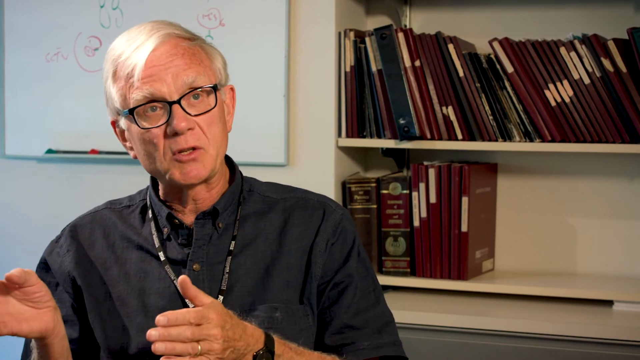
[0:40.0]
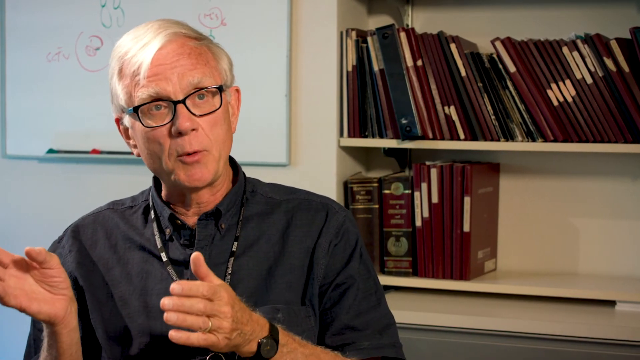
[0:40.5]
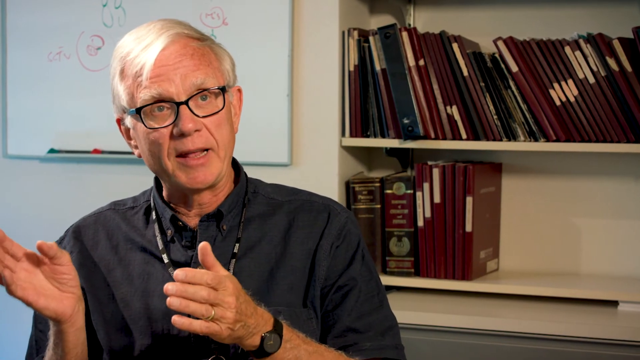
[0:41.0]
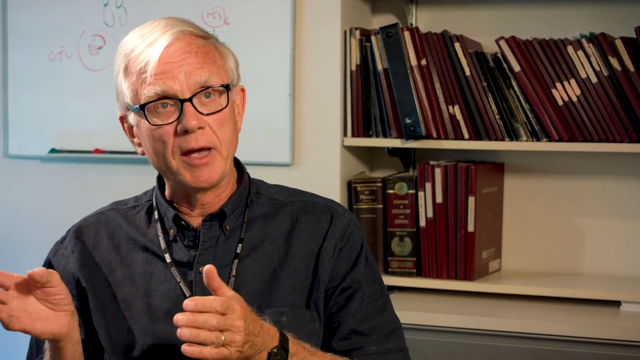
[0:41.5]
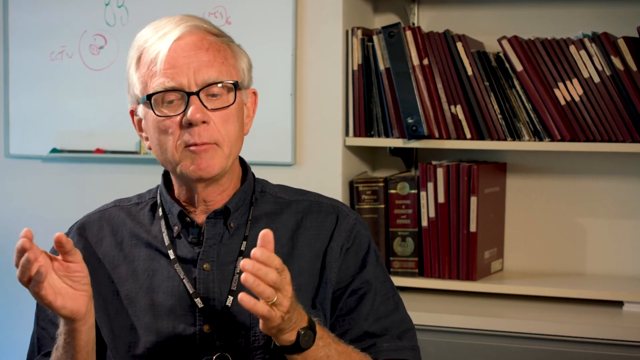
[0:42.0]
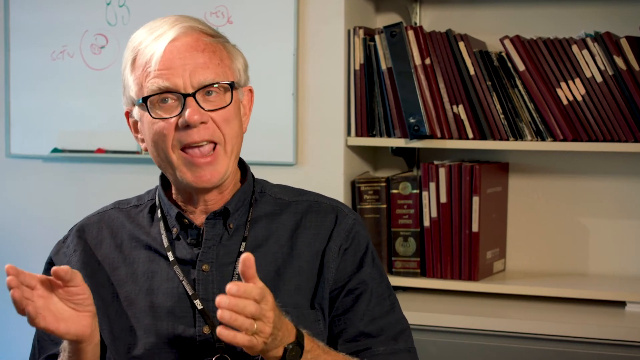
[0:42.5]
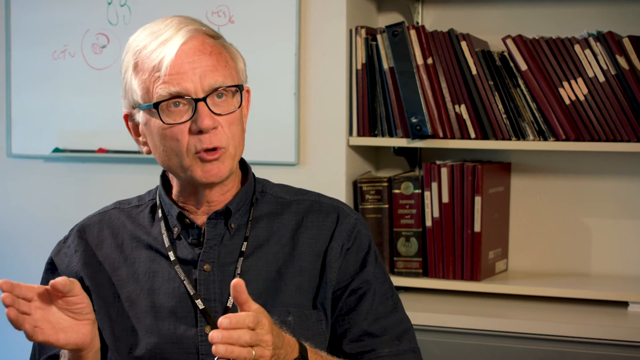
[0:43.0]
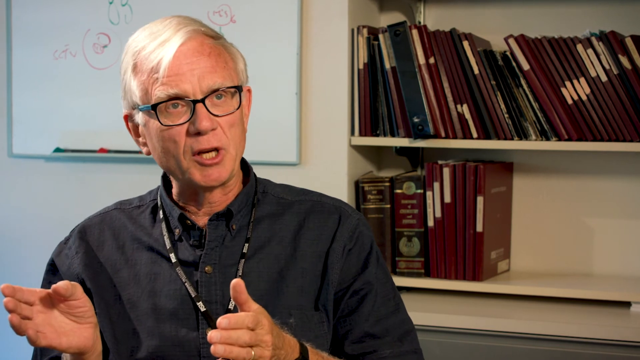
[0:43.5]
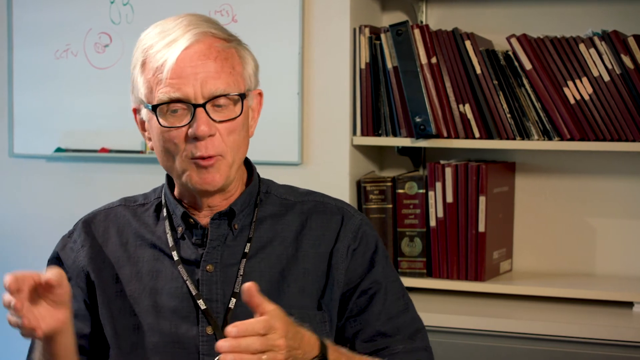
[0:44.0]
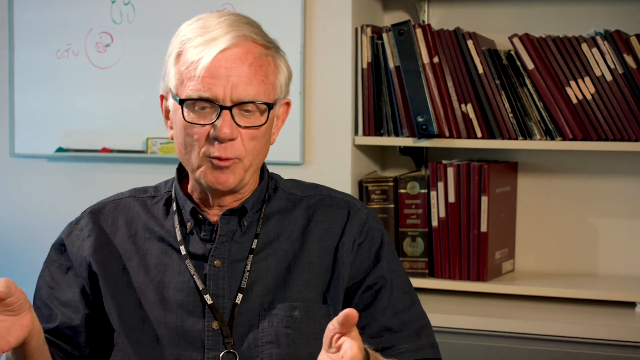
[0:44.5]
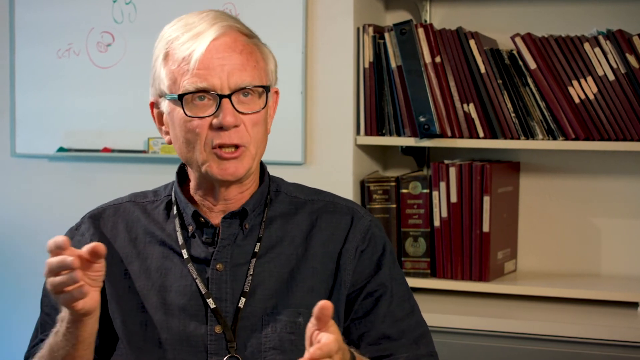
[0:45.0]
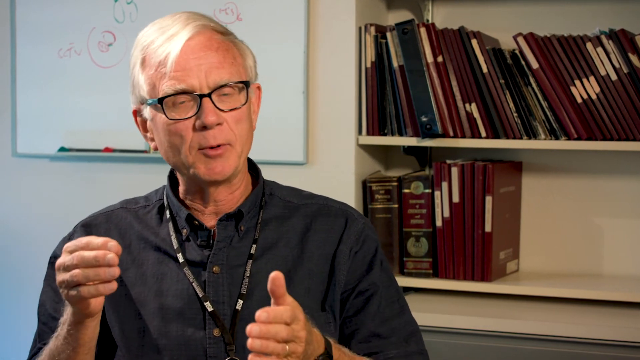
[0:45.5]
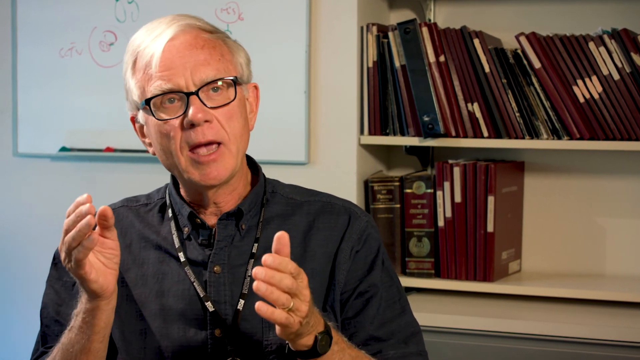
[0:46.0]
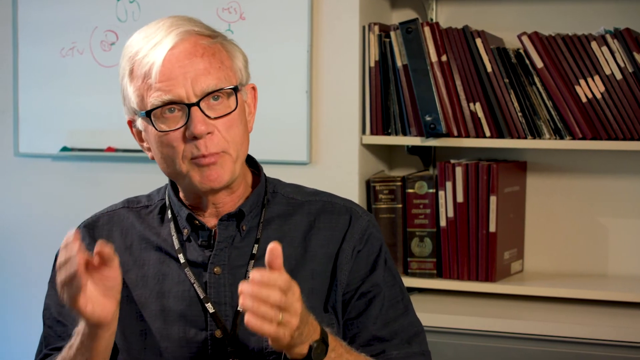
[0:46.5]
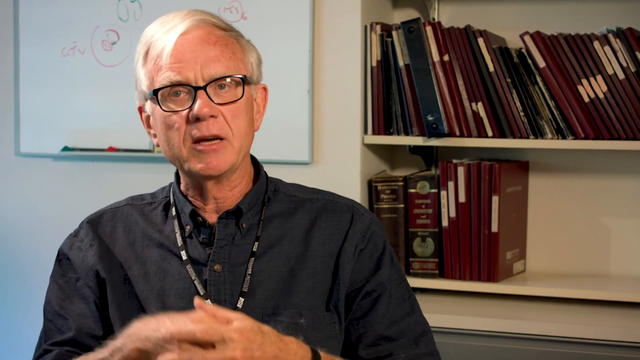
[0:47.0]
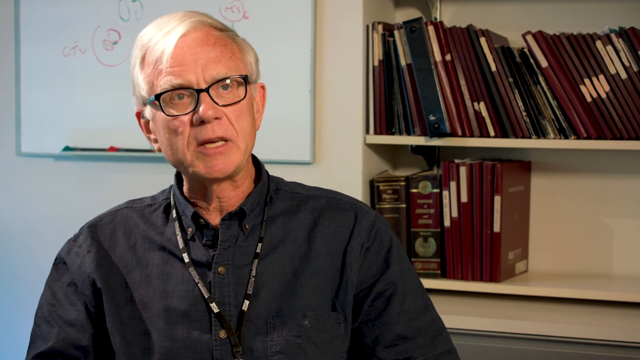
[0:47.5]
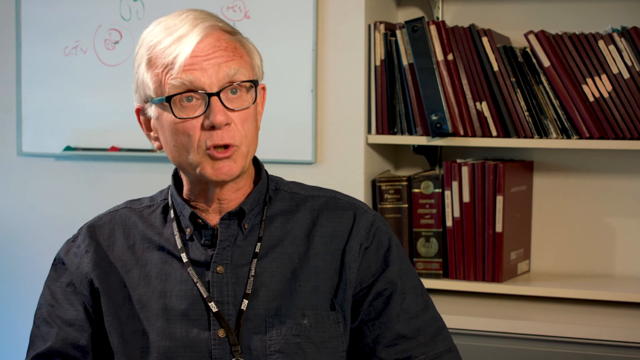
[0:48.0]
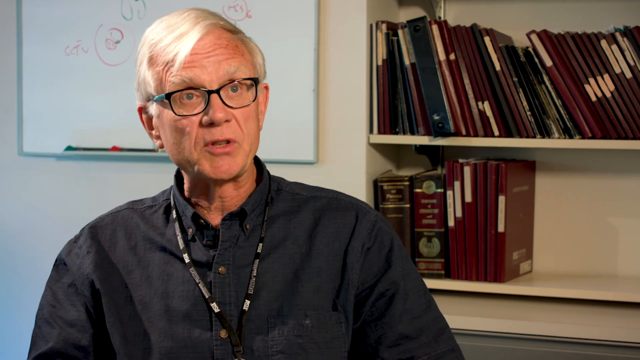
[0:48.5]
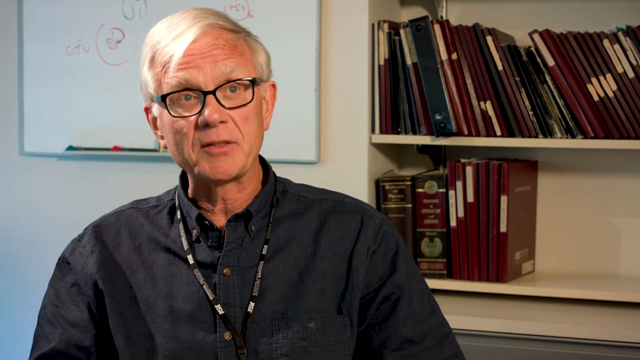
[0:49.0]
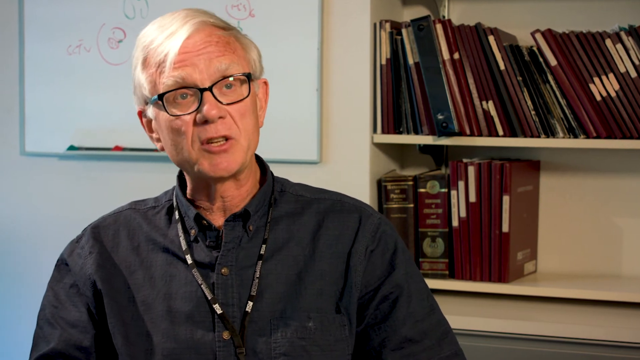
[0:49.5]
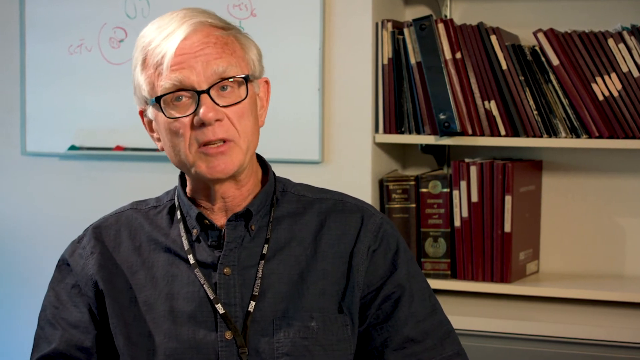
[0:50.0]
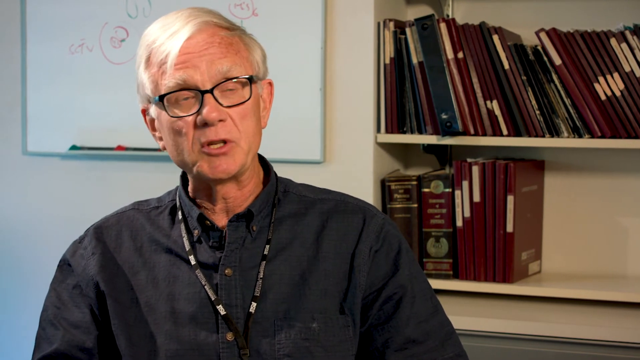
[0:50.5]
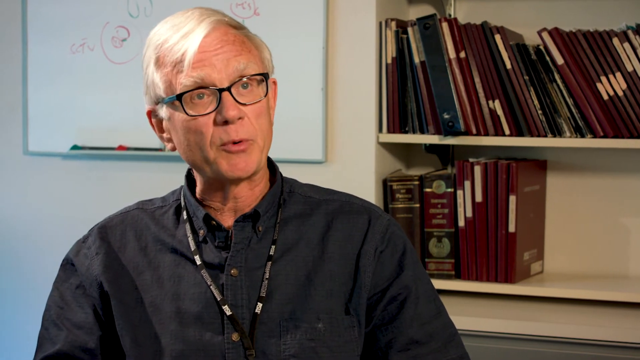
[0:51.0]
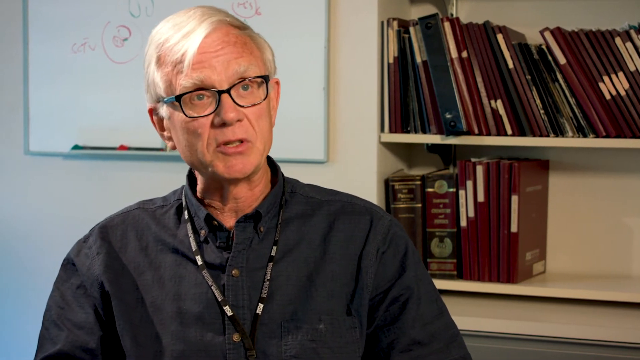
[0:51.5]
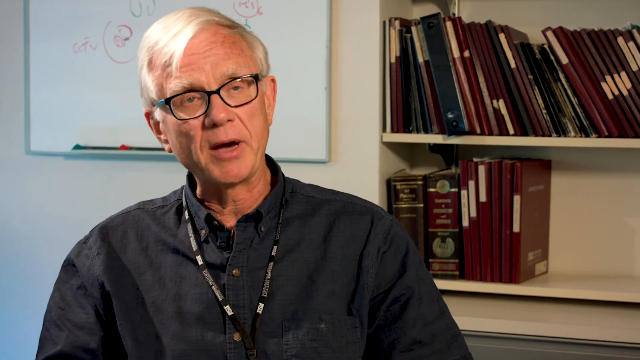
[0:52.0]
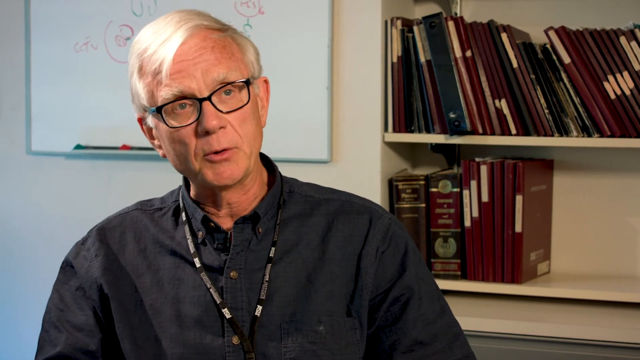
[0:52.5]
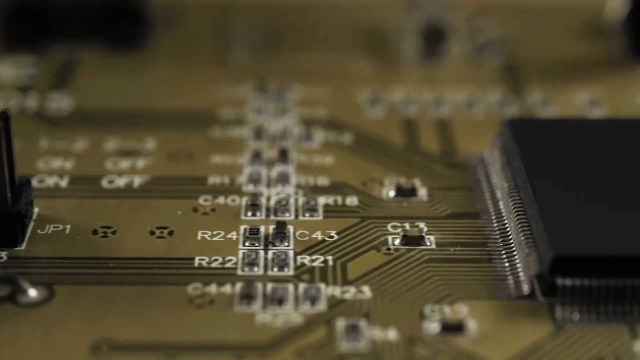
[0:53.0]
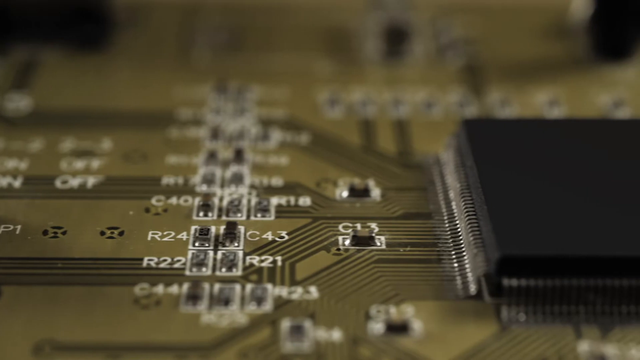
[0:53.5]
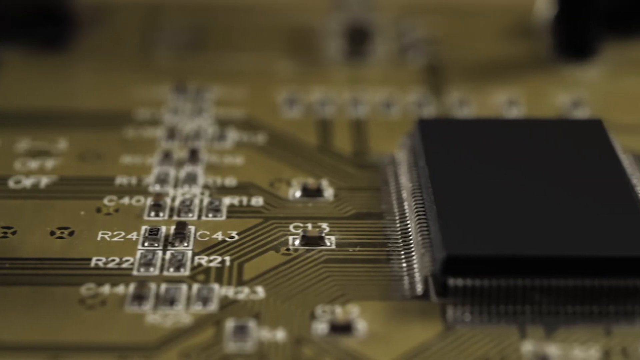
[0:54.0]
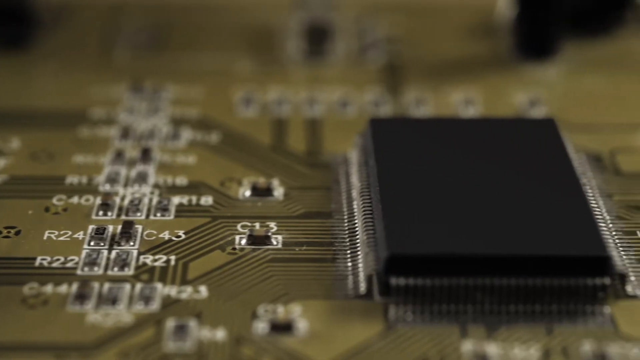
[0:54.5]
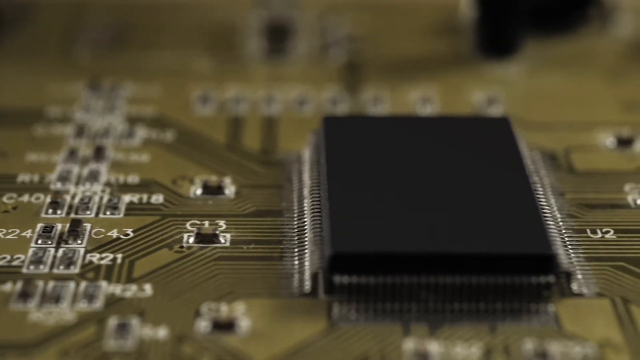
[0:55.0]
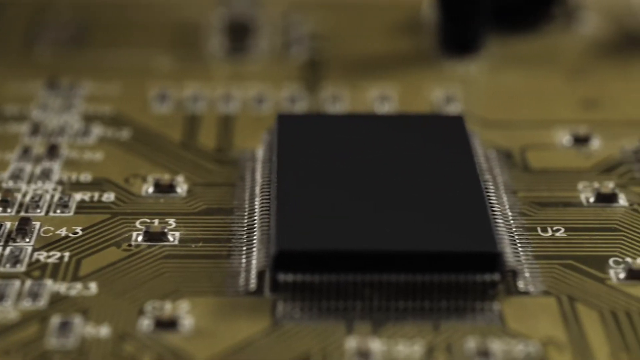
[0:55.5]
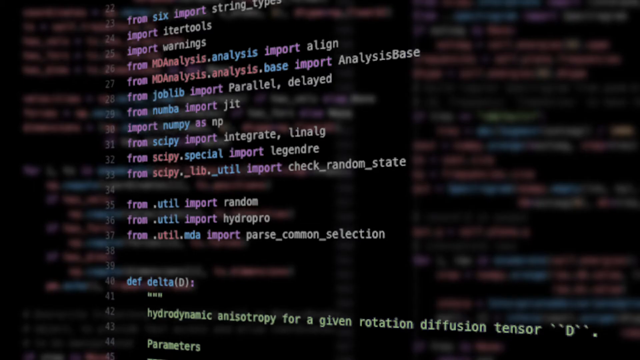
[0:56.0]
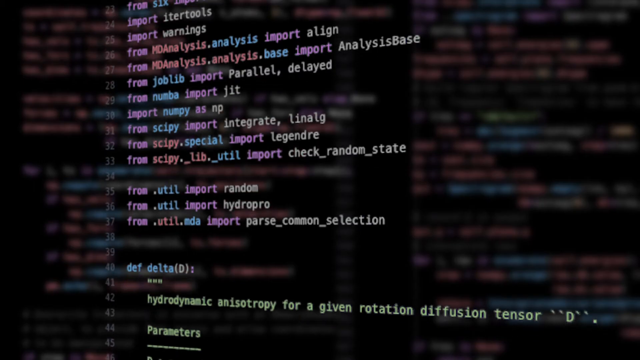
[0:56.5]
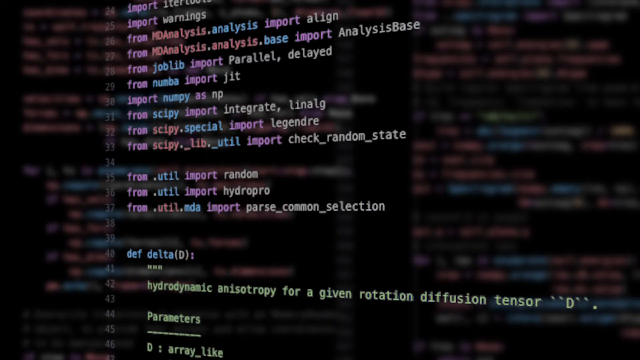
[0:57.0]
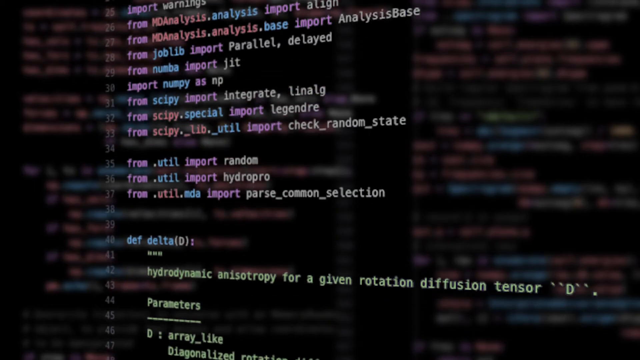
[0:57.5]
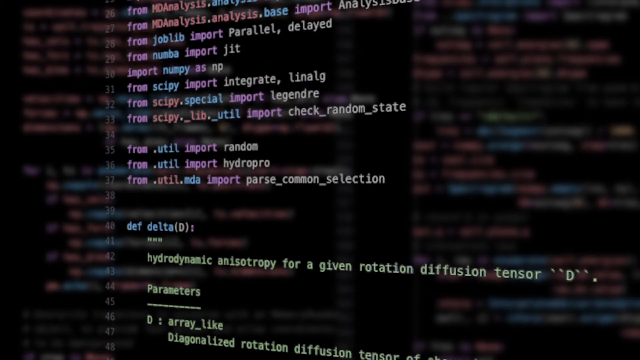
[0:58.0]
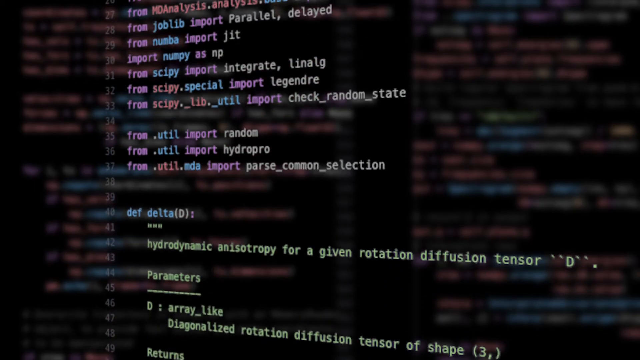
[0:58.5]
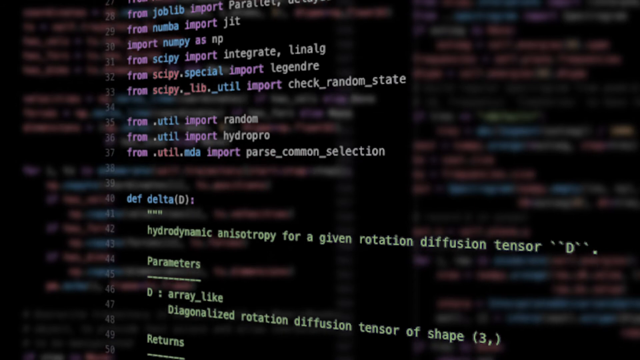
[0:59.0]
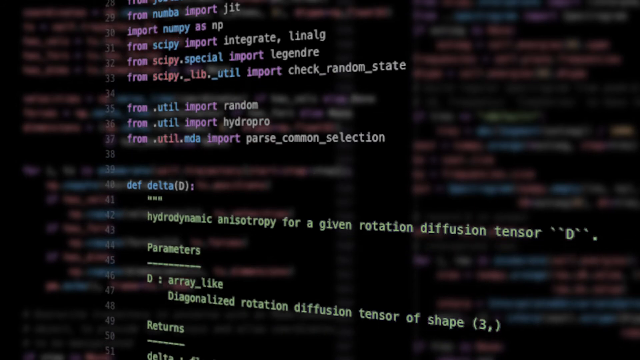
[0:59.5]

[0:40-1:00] The man talks with his hands, not quite looking at the camera; he appears to be talking to someone to the right of the person holding the camera. A gold circuit board with a black component on it is shown, followed by computer writing or code on an angled black screen, including the words "rotation diffusion". He wears a black watch and black glasses, is probably in his 40s or 50s, and seems mild-mannered. His hair is parted very much to the right, from the very far left.